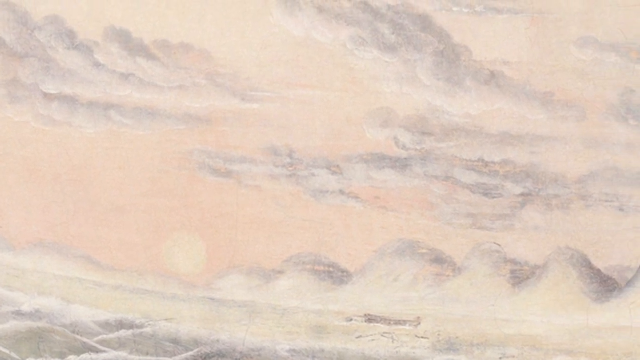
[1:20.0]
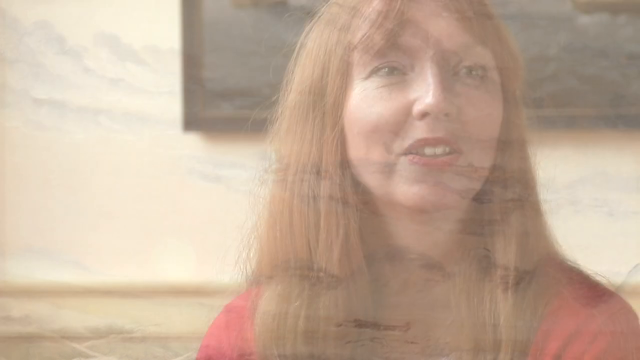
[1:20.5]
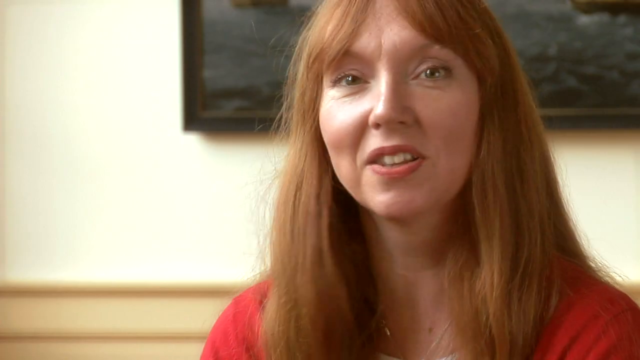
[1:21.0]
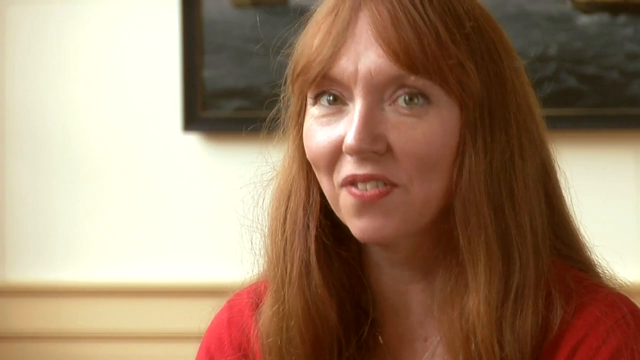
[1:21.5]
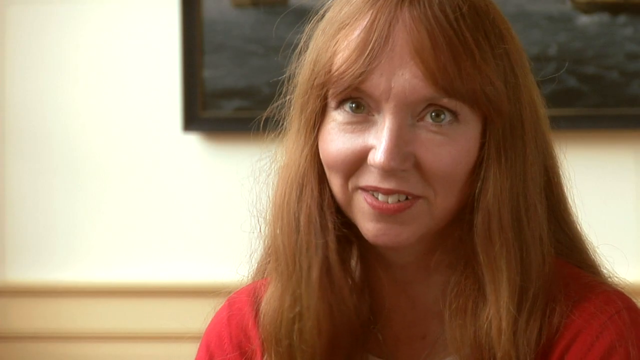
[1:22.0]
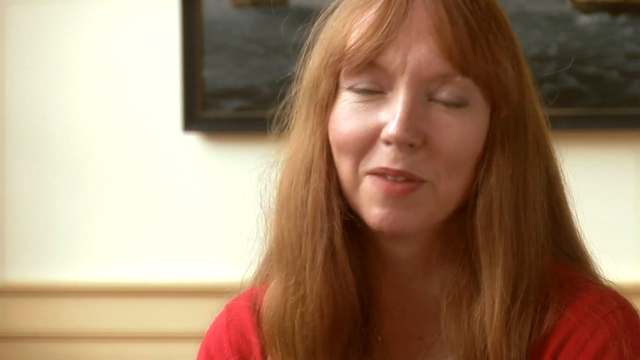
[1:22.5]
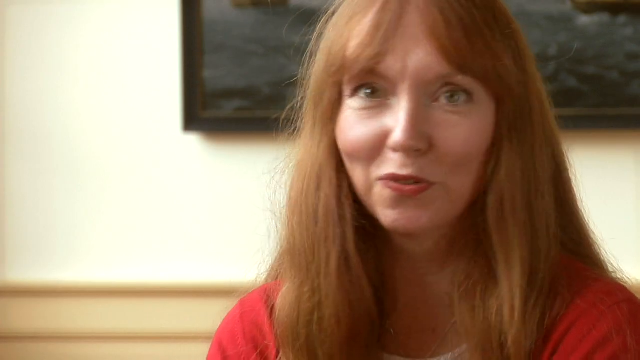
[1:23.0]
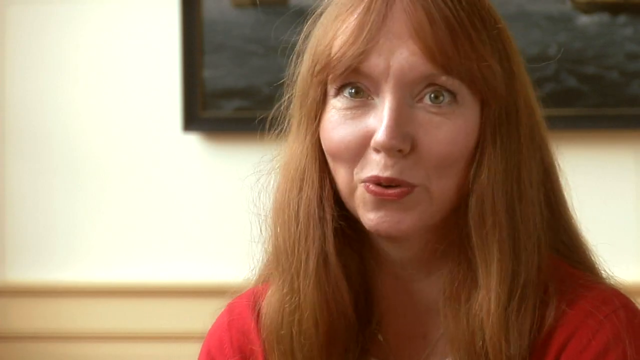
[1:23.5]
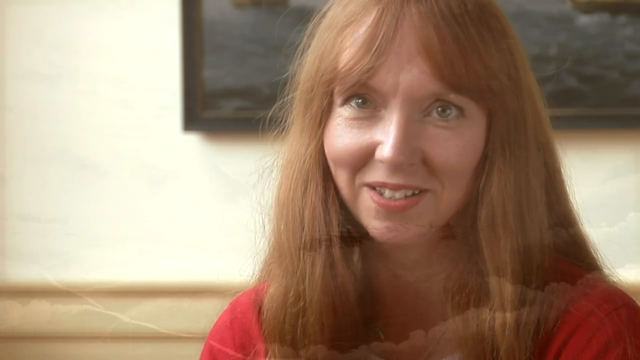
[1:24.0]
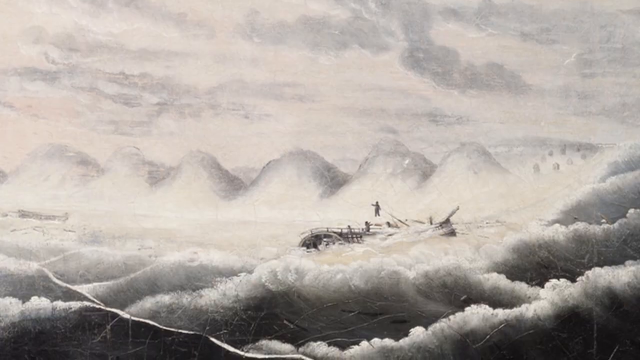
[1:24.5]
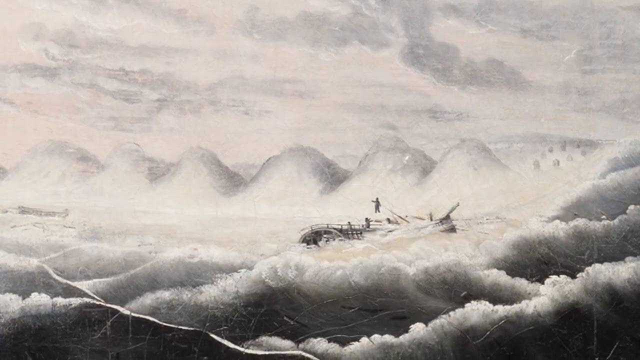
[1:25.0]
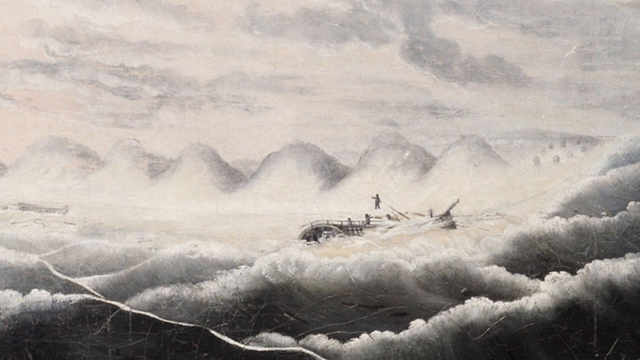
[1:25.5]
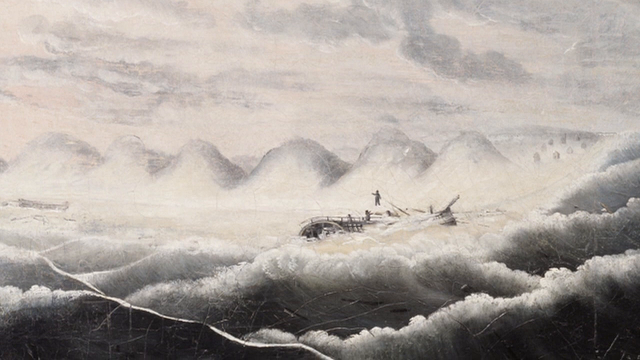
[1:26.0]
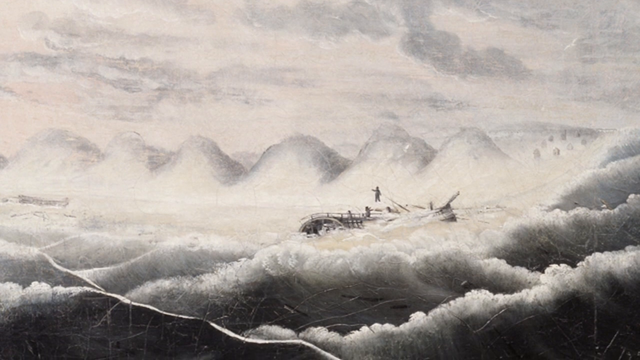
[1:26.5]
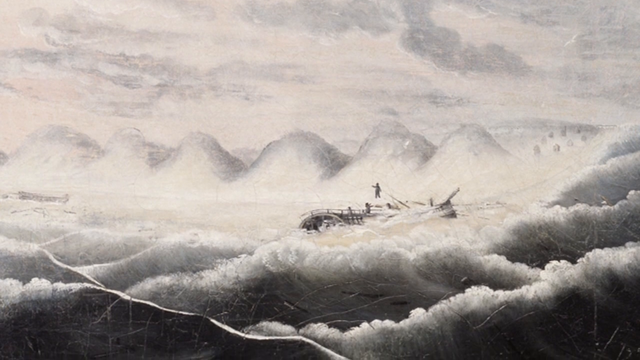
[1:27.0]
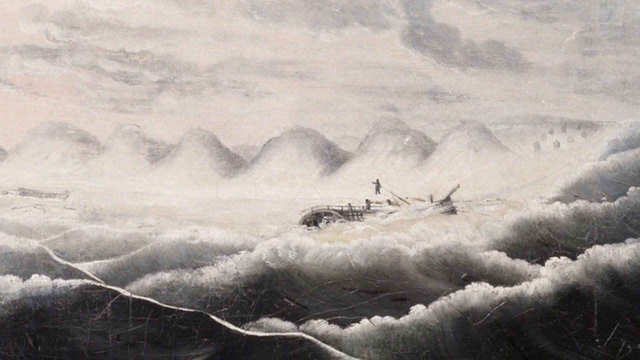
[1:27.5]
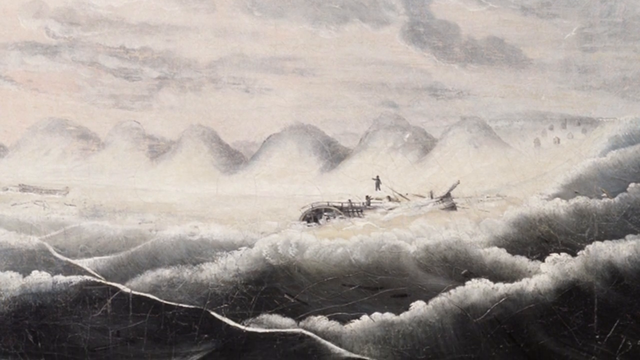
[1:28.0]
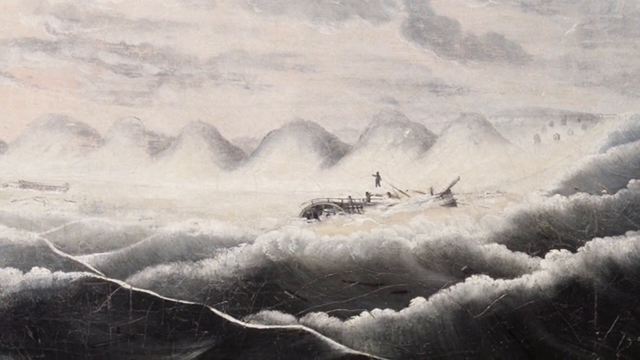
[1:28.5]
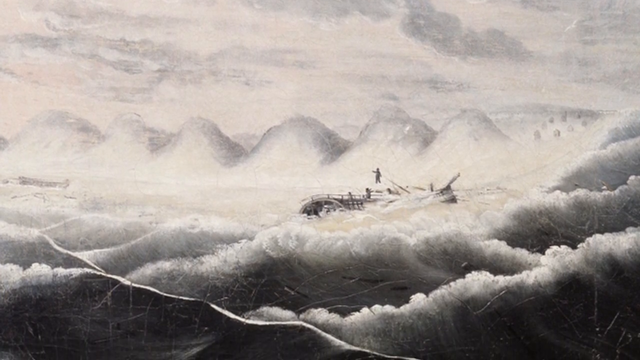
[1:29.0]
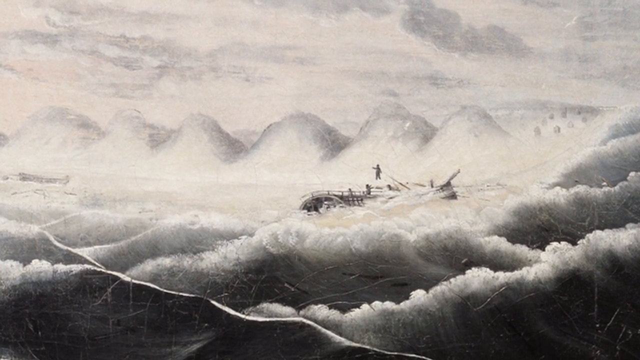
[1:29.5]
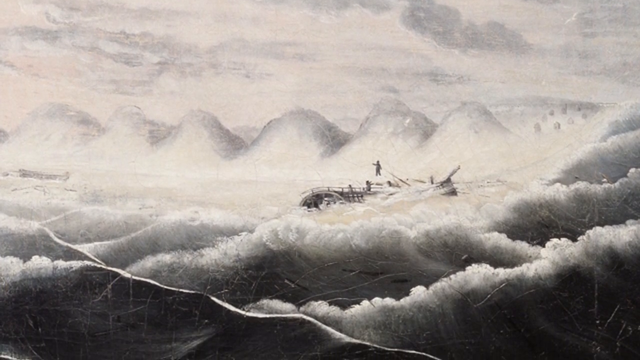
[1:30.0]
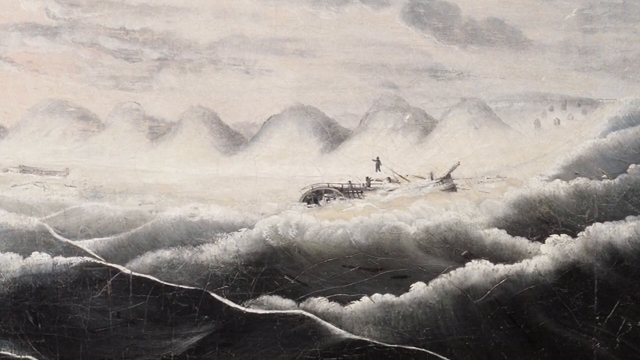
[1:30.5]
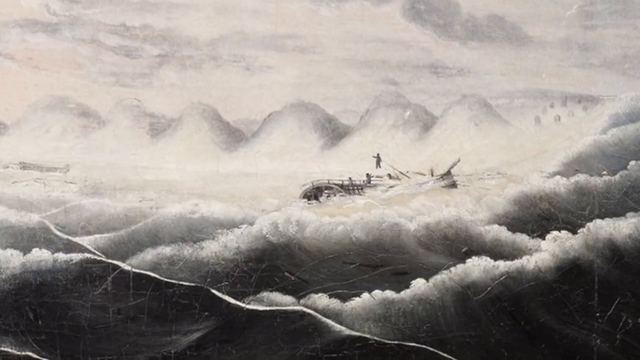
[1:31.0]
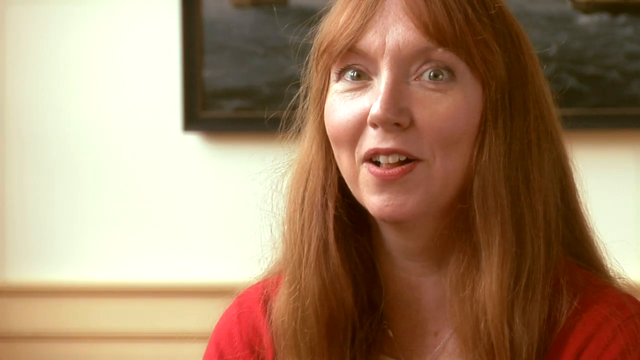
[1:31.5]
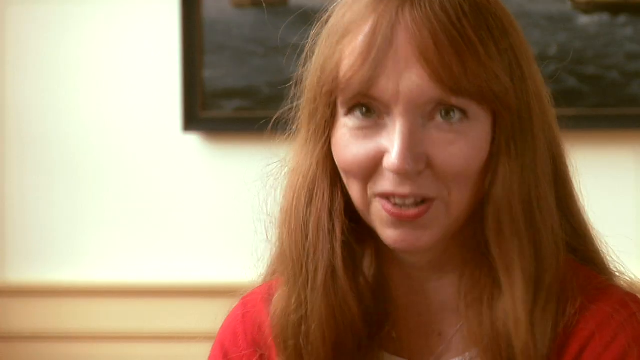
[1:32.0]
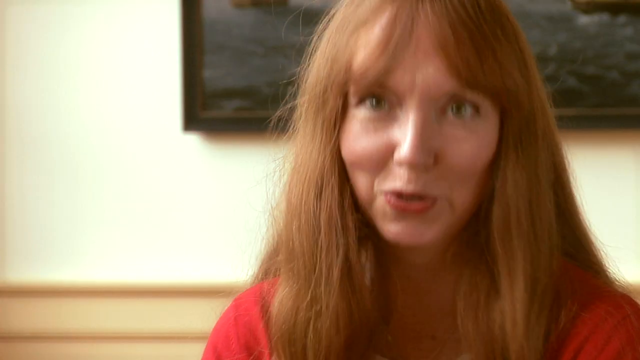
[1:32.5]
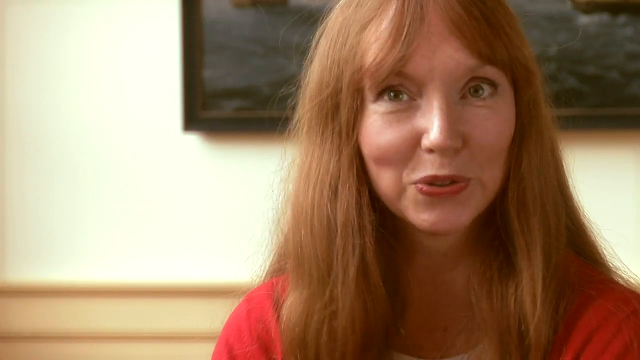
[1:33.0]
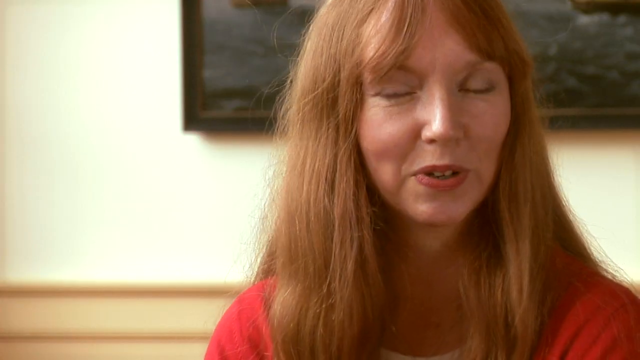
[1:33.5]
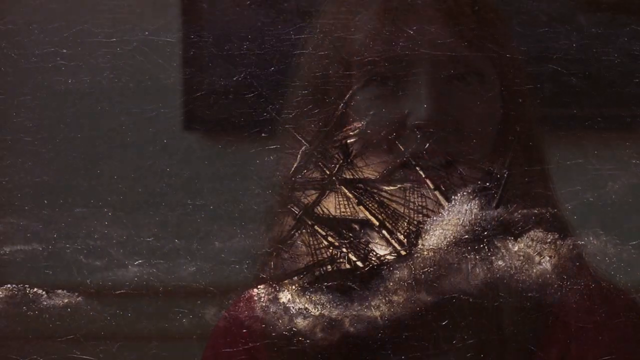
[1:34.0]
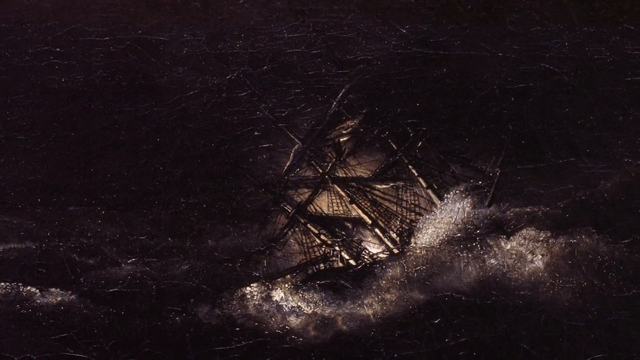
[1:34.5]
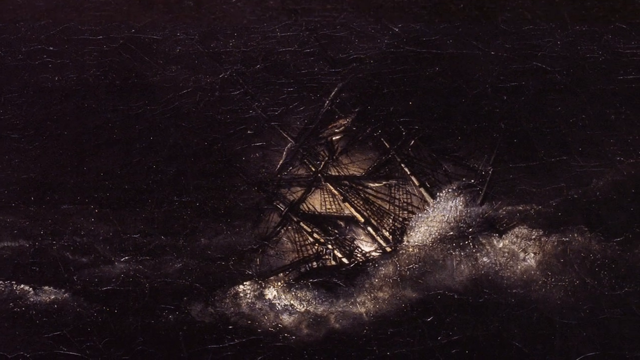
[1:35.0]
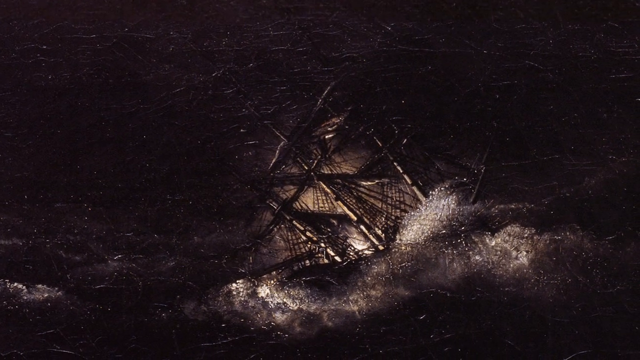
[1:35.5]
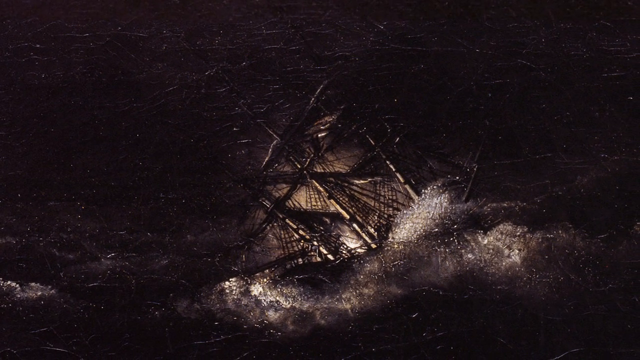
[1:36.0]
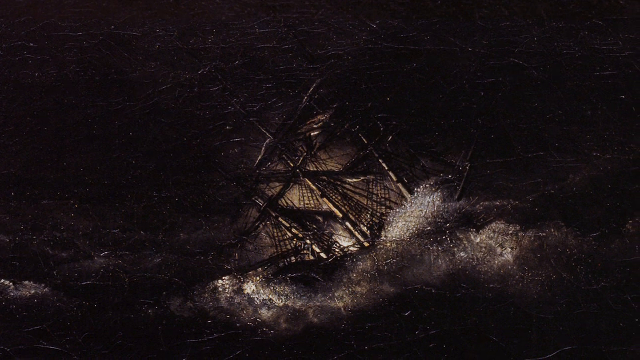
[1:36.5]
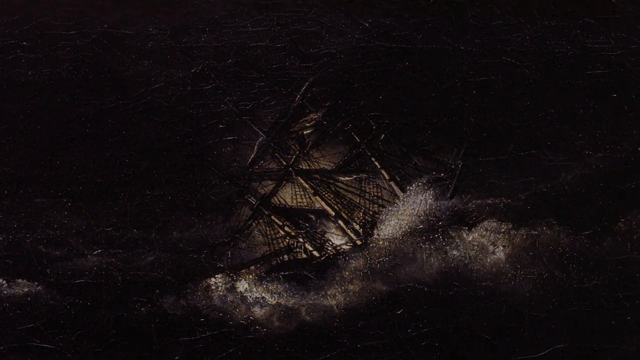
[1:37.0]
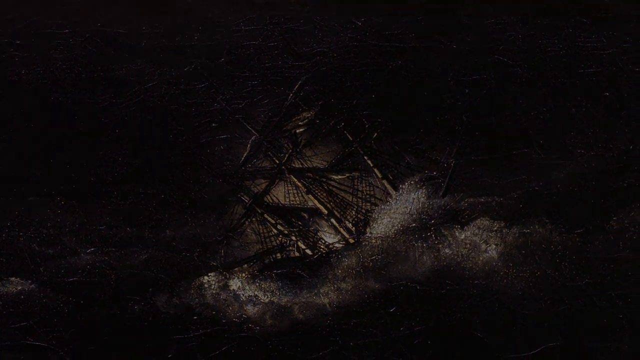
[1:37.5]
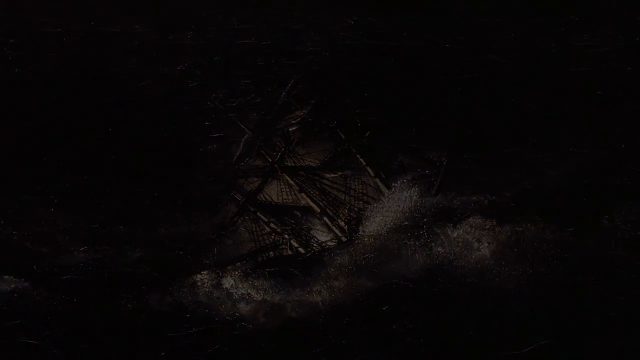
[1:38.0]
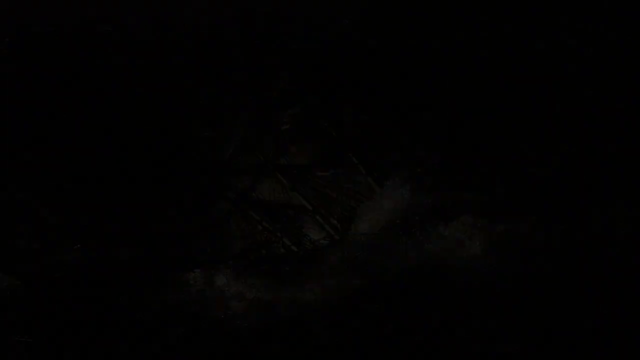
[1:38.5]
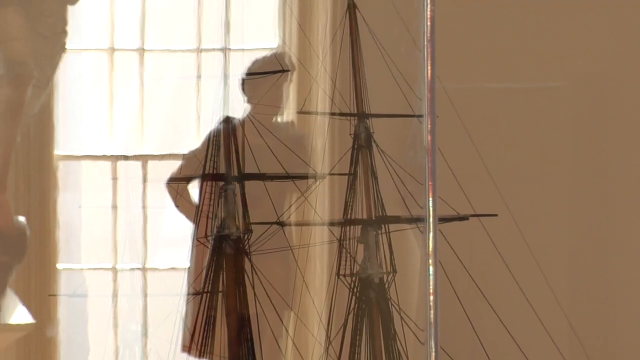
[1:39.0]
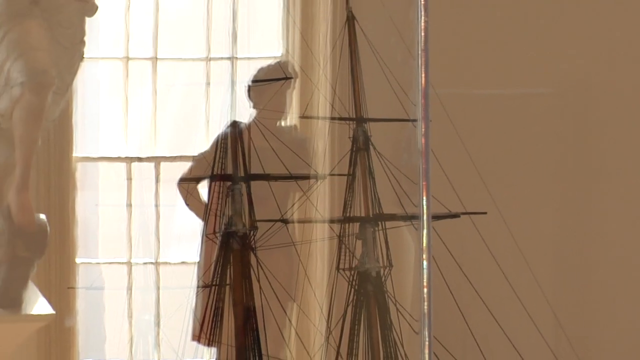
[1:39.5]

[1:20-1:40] The first picture appears very briefly, then the video cuts back to the red-haired woman, who is very expressive with her eyes, moving her head back and forth and nodding. The video cuts to a picture viewed from top to bottom, showing very rough waves and what looks like a capsized ship. It cuts back to the woman nodding up and down a little, then to a different picture that looks like a night scene in which a boat appears to be capsizing on the water; the picture is so dark that it is hard to tell. The video then cuts to live action in a museum, where there appears to be a mast in the background and a woman standing in a window, seemingly double-exposed to create a dual effect.